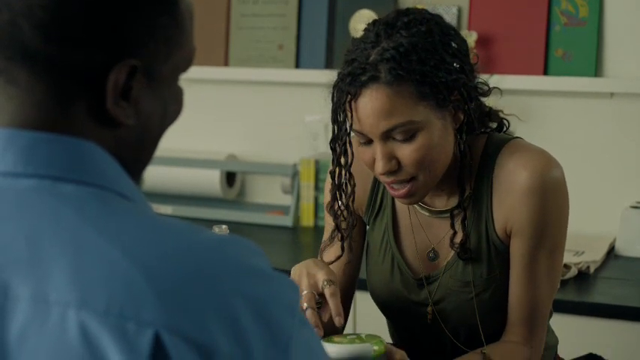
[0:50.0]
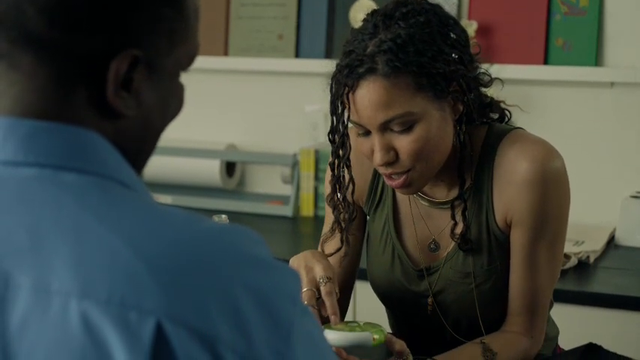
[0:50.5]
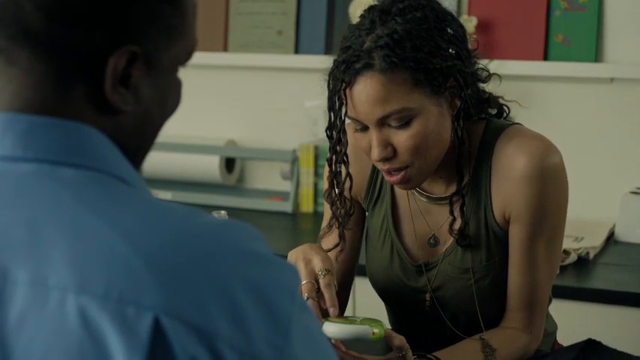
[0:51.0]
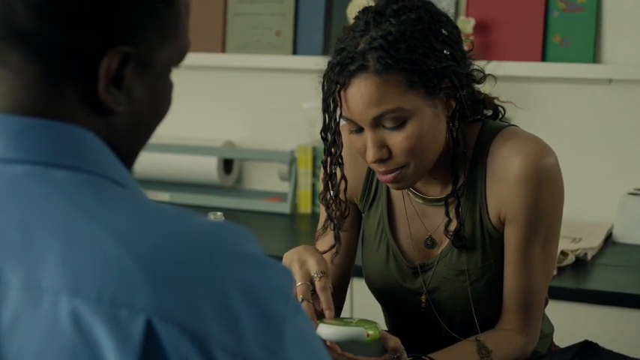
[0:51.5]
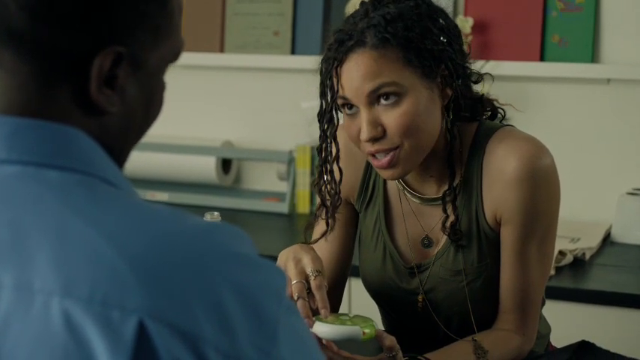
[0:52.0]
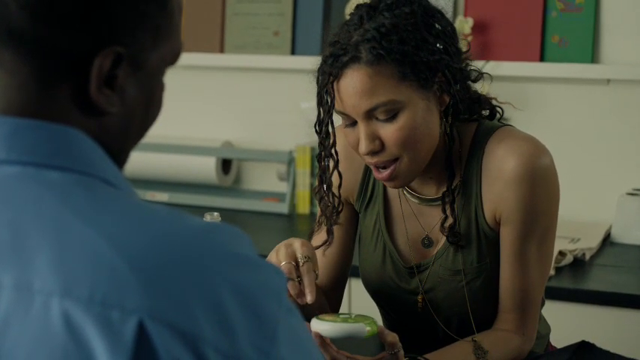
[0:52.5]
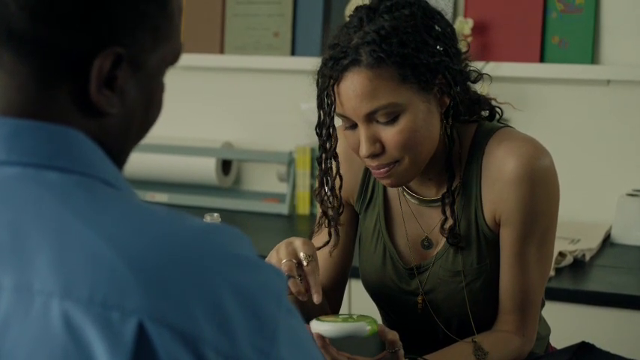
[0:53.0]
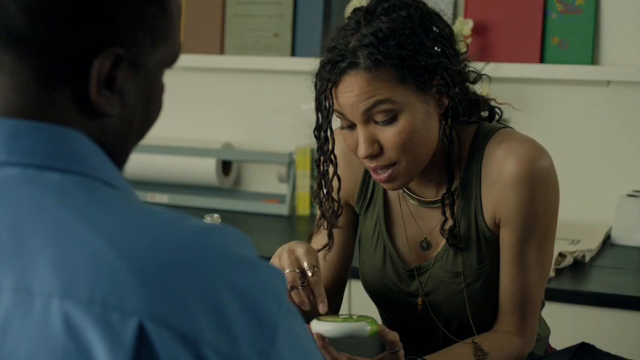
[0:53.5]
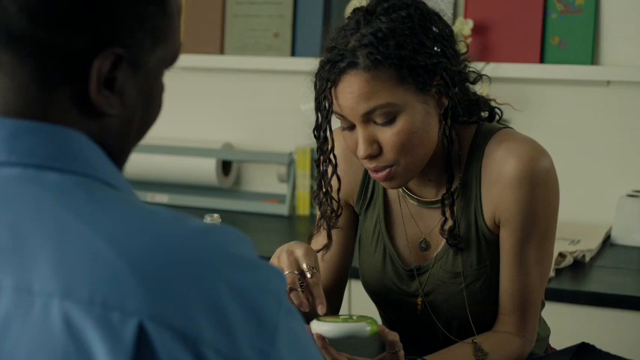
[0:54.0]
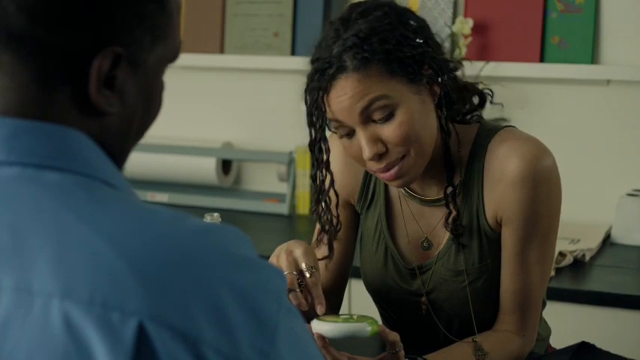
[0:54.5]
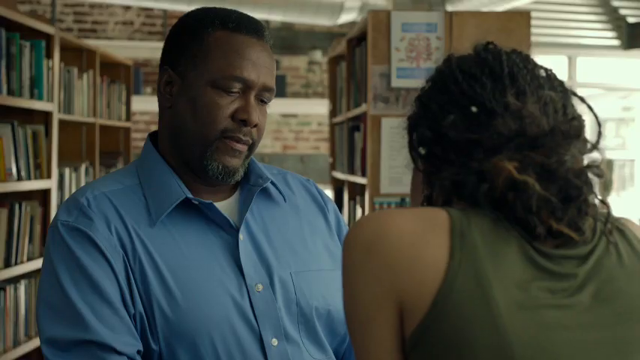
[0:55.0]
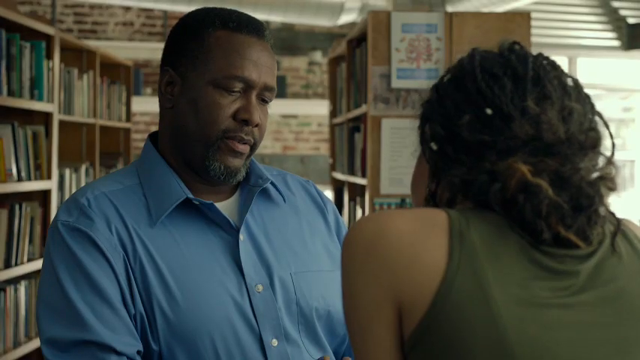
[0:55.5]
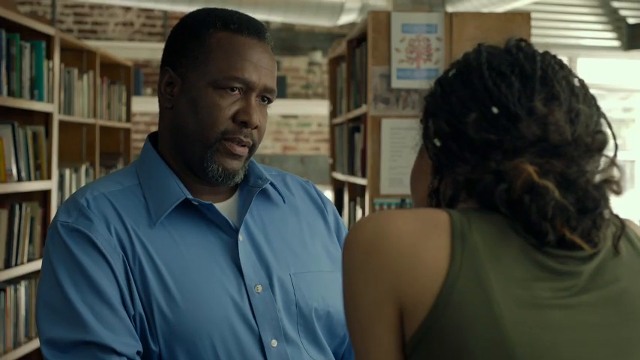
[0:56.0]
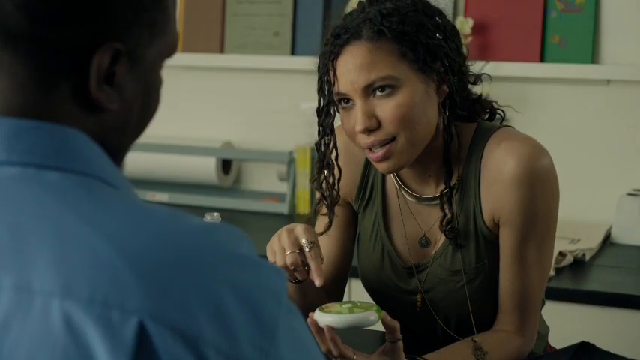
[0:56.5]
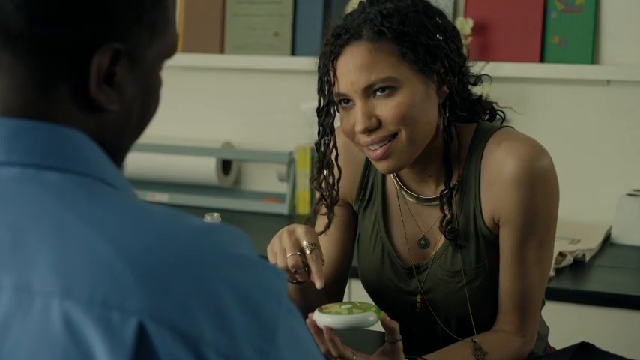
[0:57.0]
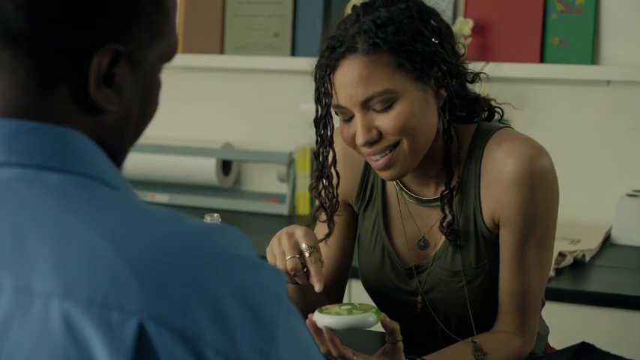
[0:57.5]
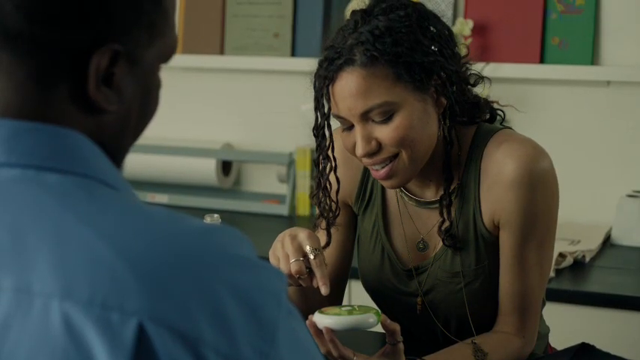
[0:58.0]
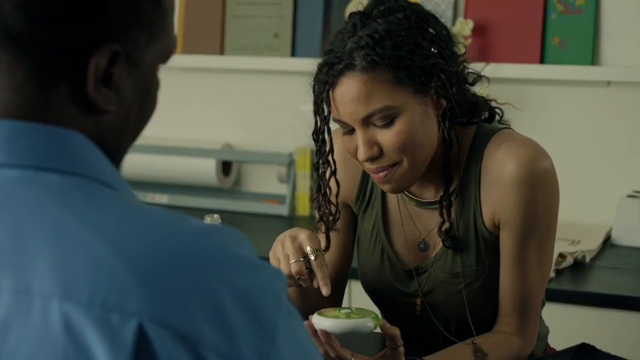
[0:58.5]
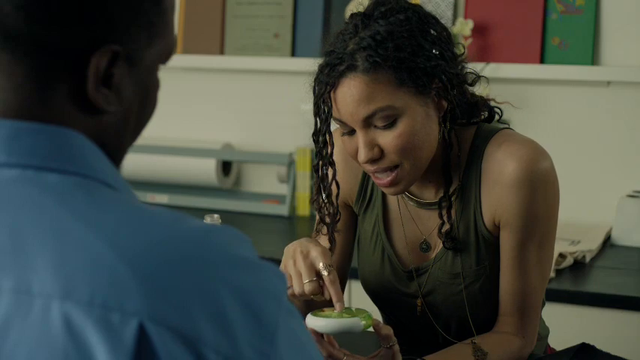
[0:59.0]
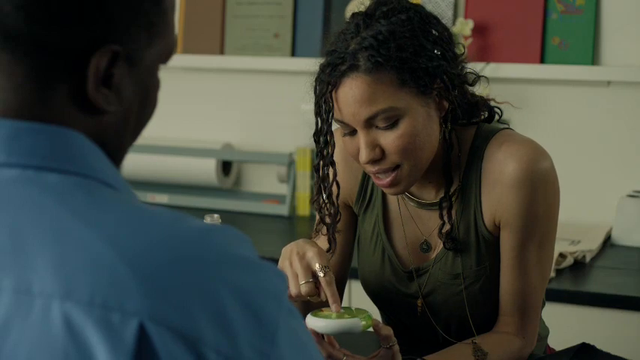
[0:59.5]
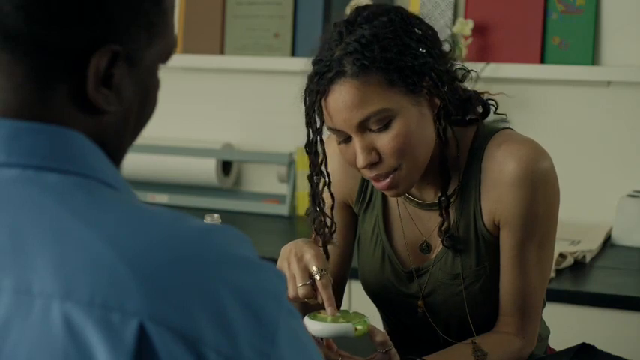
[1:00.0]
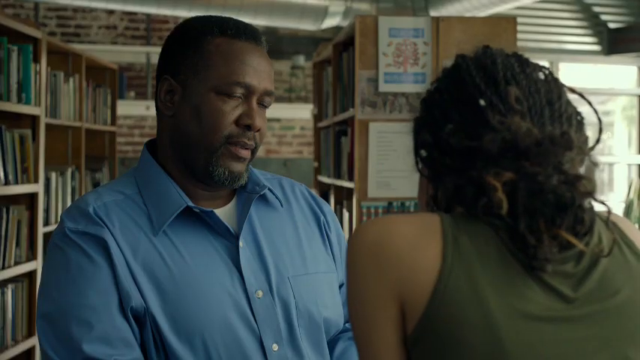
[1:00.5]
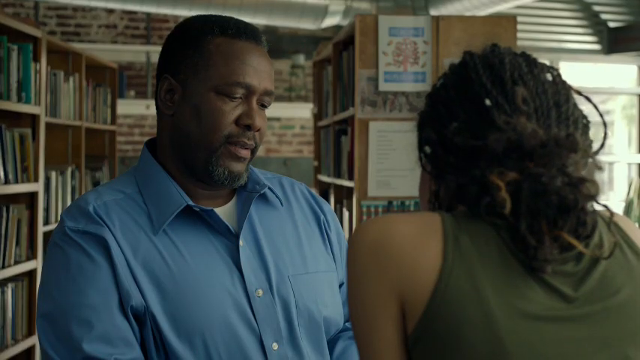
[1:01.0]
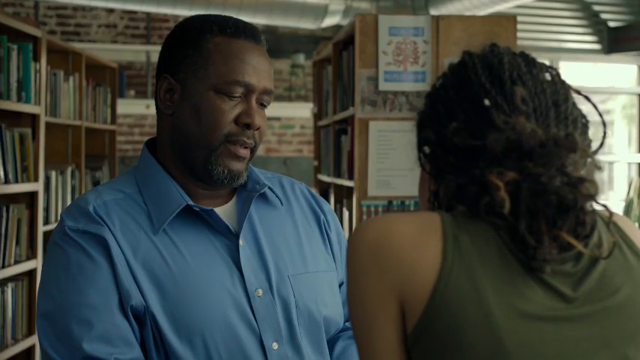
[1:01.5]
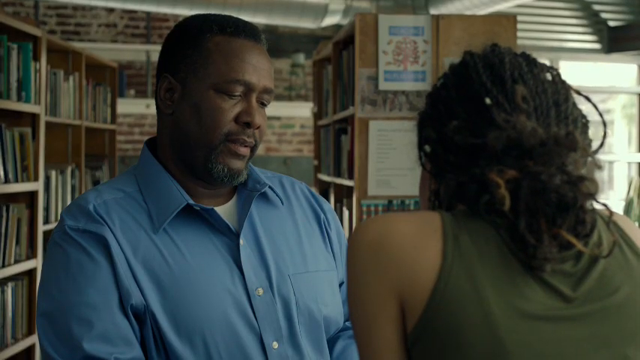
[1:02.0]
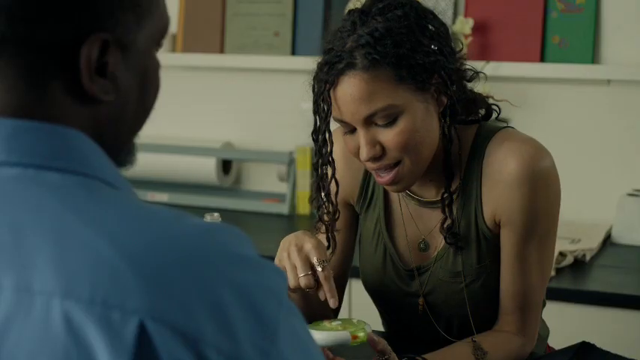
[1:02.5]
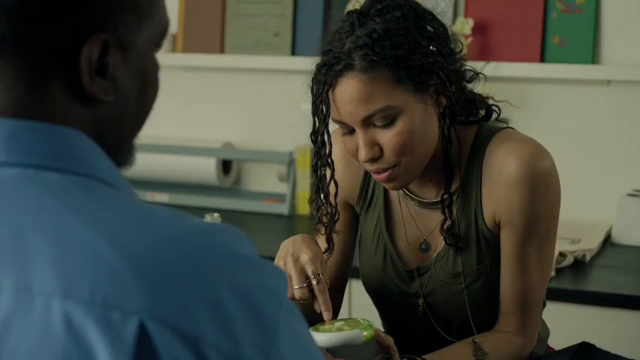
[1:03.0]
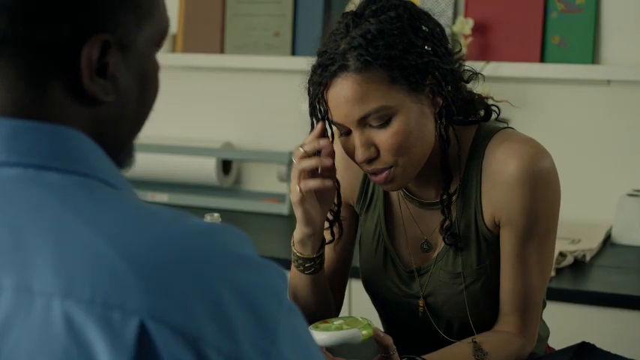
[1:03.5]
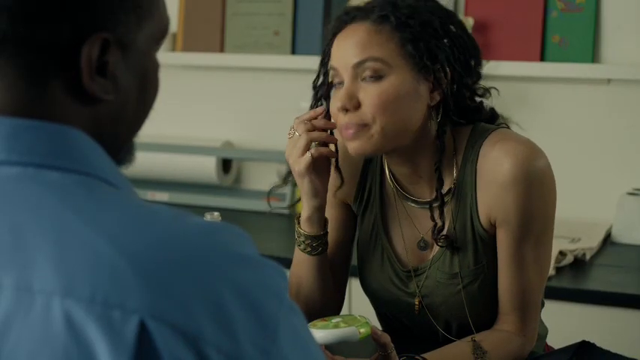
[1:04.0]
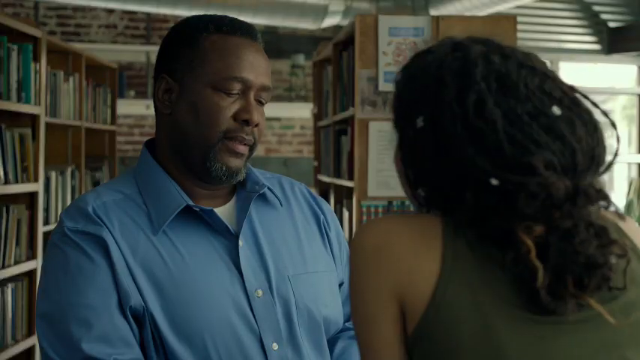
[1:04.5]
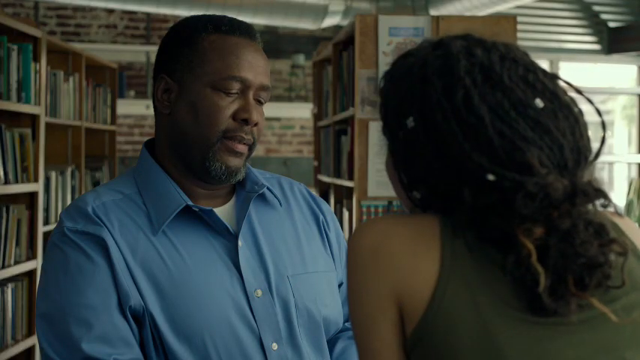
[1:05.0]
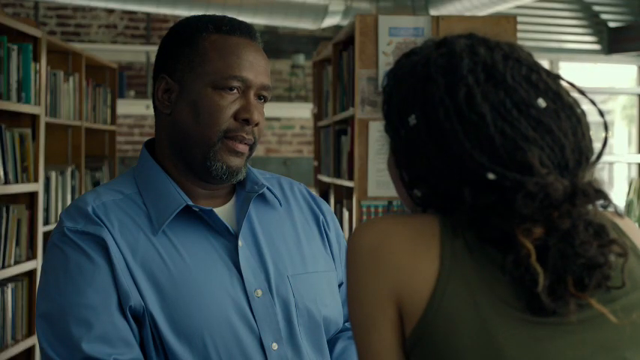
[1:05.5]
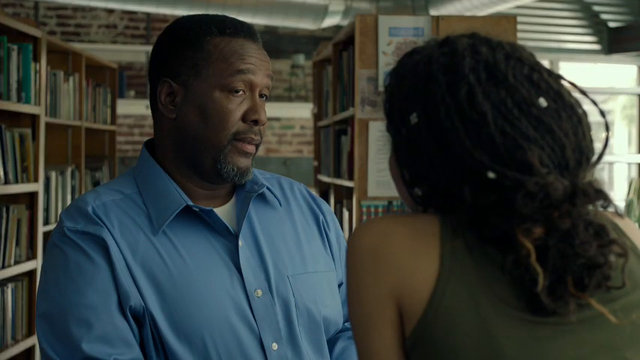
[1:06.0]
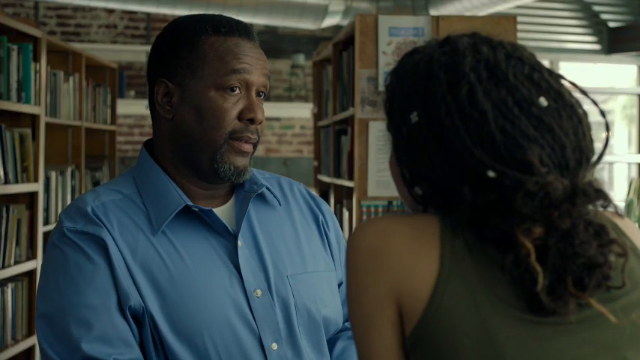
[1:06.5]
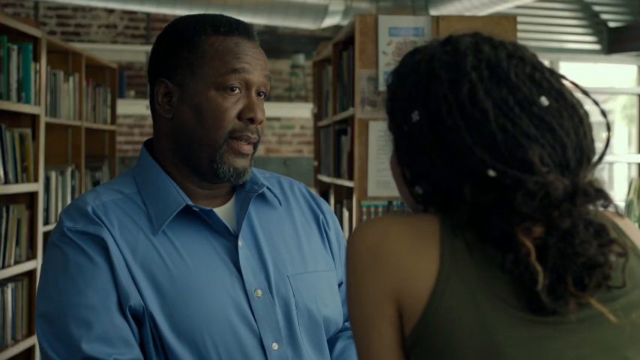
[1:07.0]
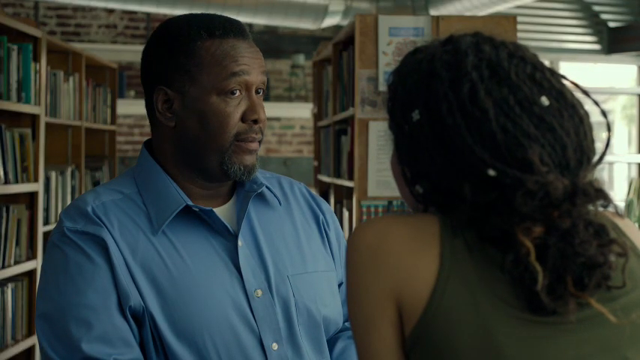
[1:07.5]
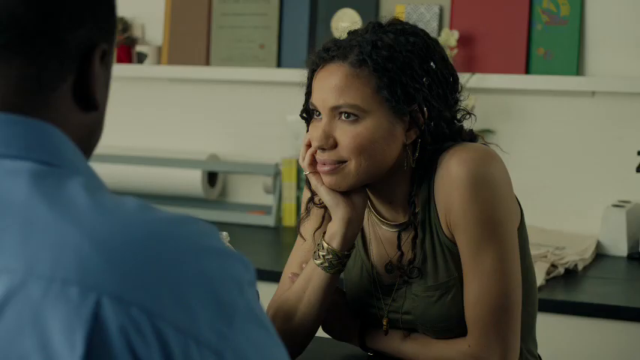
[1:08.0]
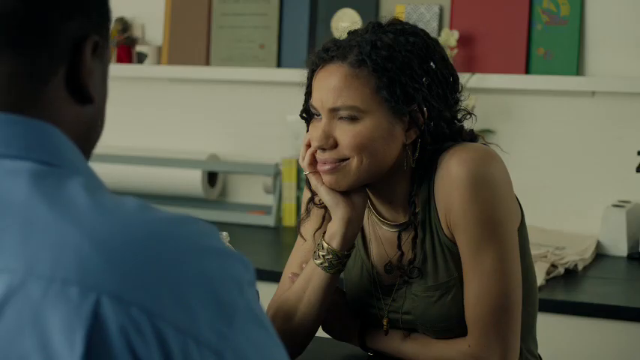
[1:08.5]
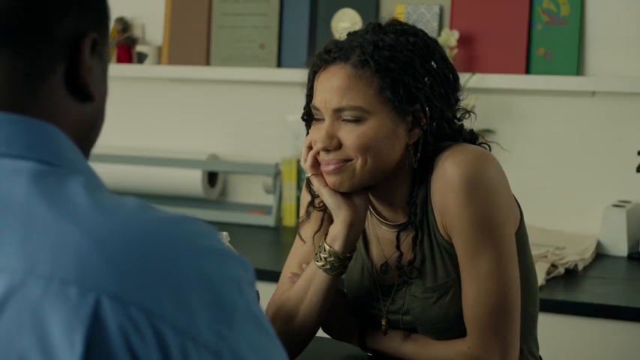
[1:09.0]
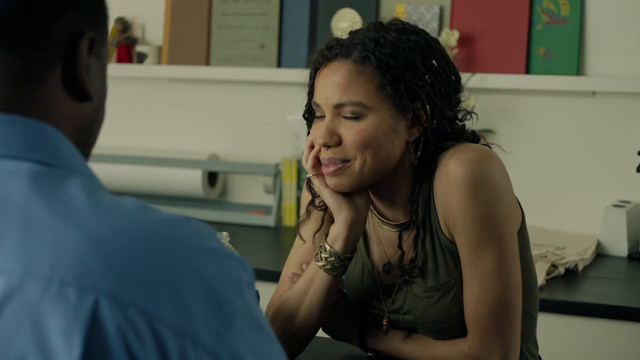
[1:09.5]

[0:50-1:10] Just right of center, a young Black woman is seen from the torso up. Her hair is either braided or dreadlocked, bunched into sections, fairly wavy, black and long, reaching about mid-chest, and she wears a dark green tank top. She looks down at something in front of her that is out of view. The whole left side of the frame shows the back right half of a middle-aged Black man, from the shoulders up to about mid-head. She talks to him, slightly smiling, and then the camera goes down to show what seems to be a circular piece of plastic she is looking at, with one white edge and other areas that look kind of pea green but transparent, apparently some kind of device. The shot goes back to him looking a little confused, then to her as she seems to be trying to figure the item out. It returns to him as he asks her a question, then back to her as she smiles and shrugs her shoulders.